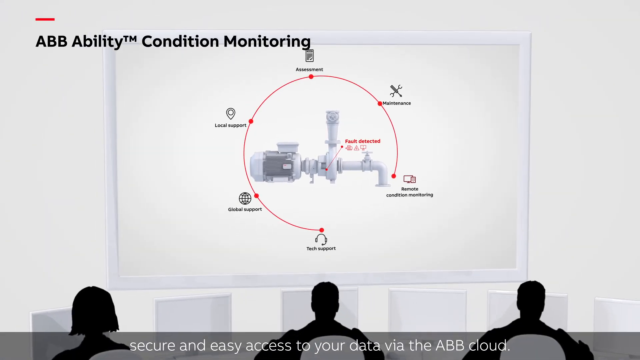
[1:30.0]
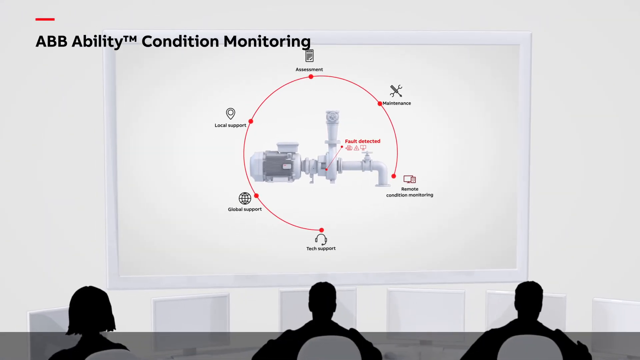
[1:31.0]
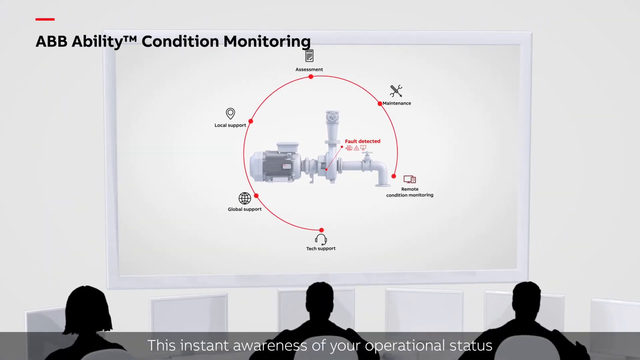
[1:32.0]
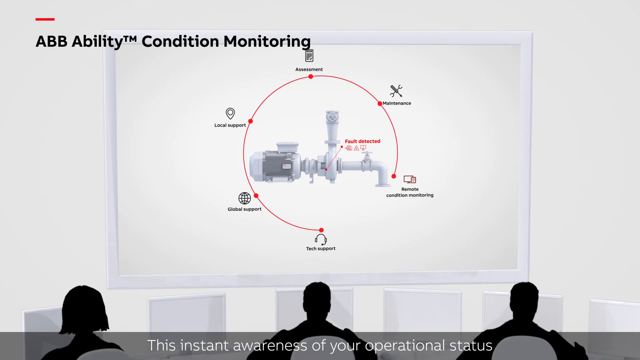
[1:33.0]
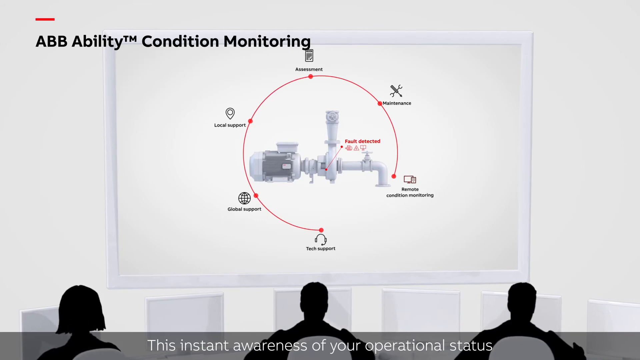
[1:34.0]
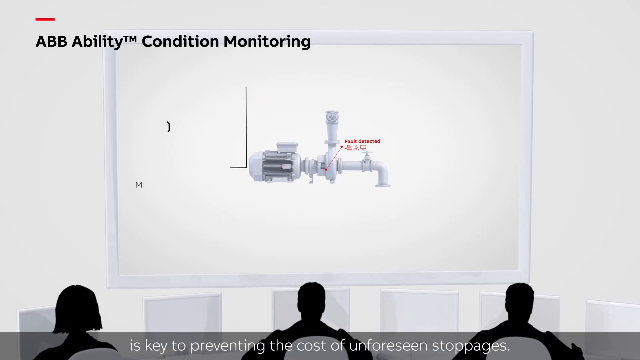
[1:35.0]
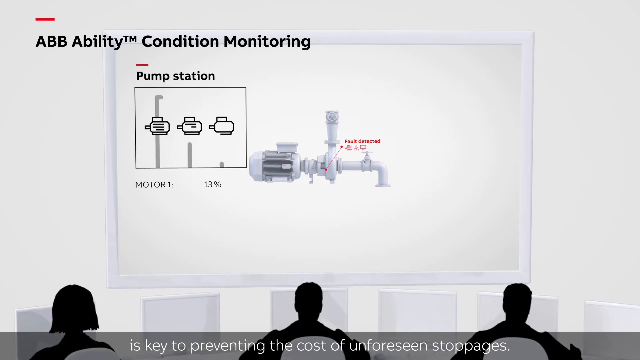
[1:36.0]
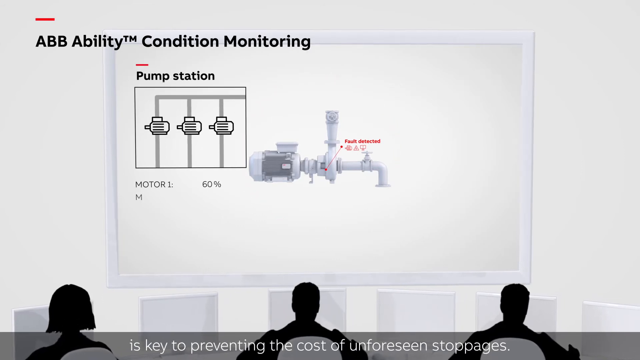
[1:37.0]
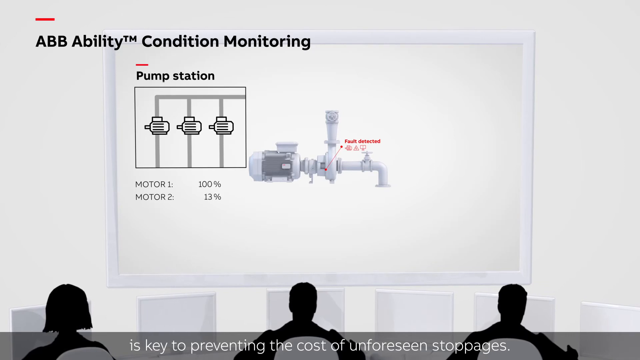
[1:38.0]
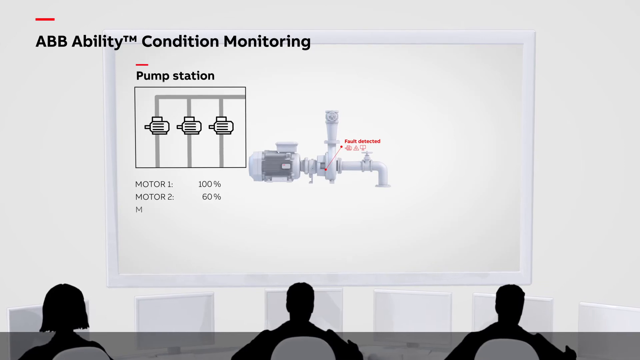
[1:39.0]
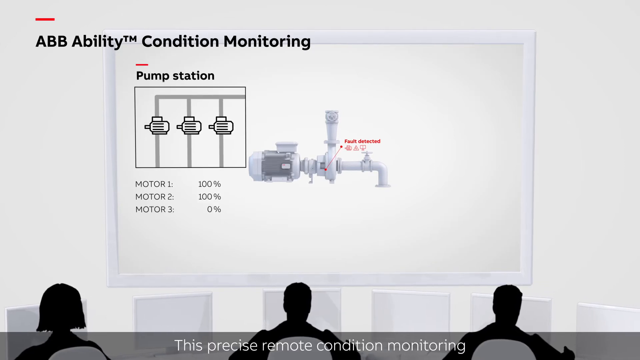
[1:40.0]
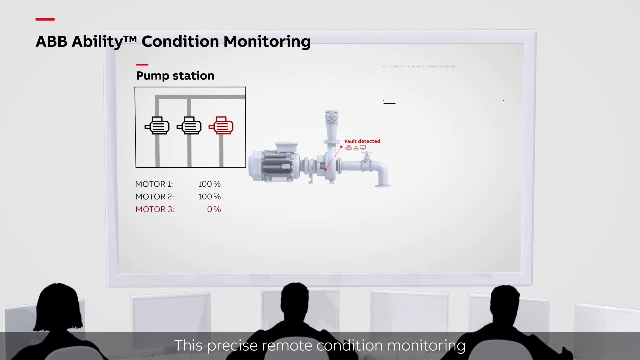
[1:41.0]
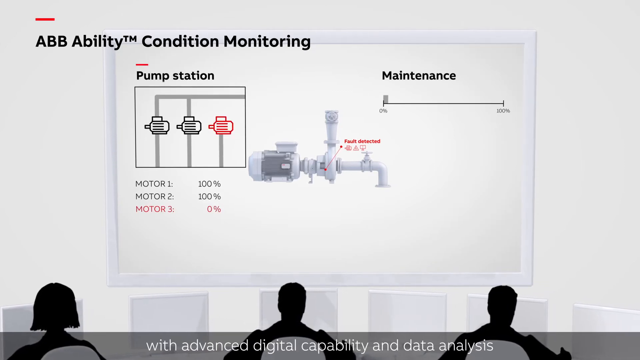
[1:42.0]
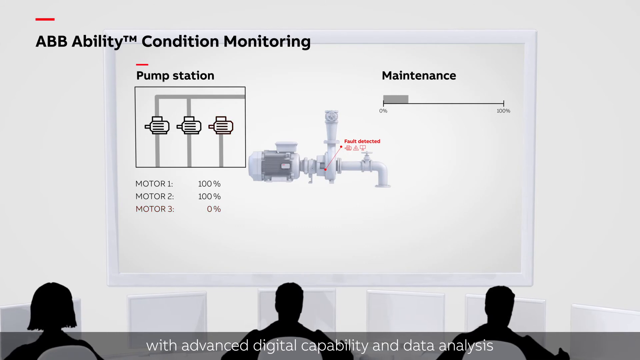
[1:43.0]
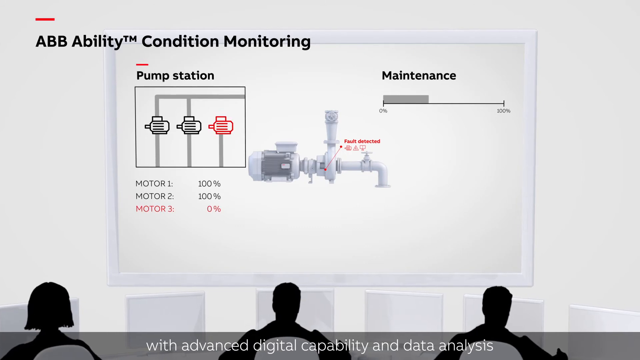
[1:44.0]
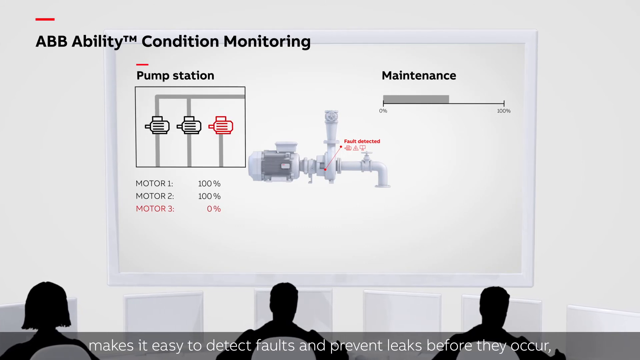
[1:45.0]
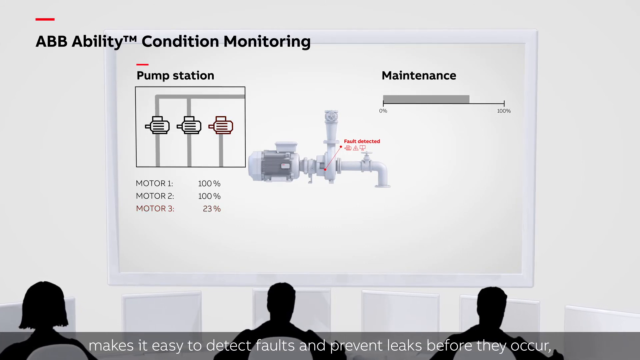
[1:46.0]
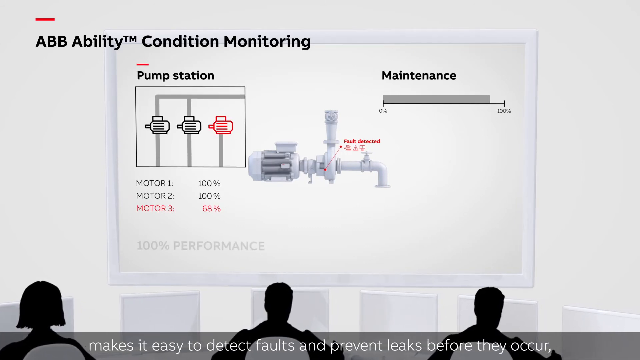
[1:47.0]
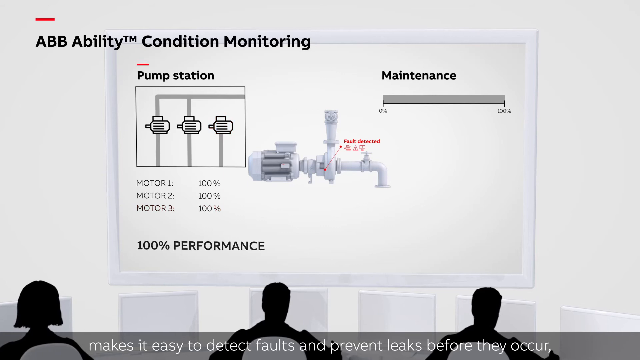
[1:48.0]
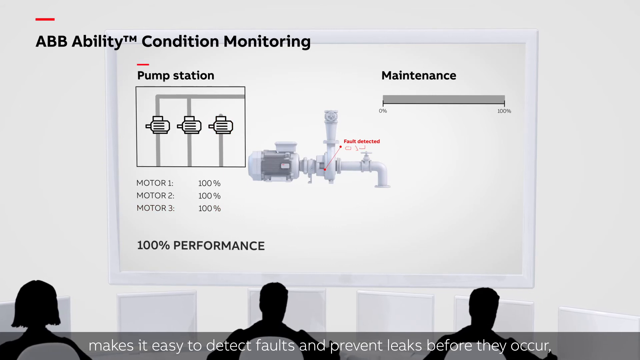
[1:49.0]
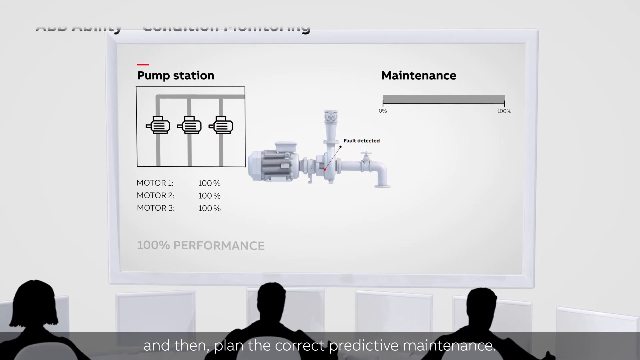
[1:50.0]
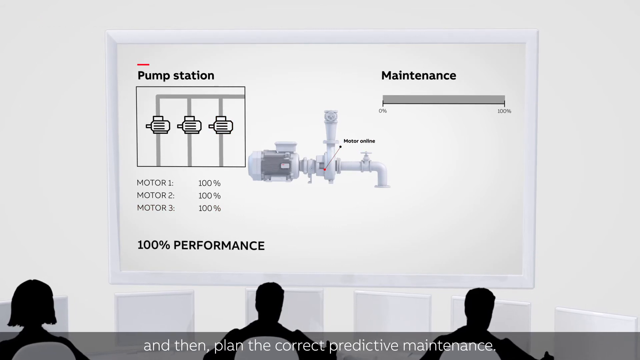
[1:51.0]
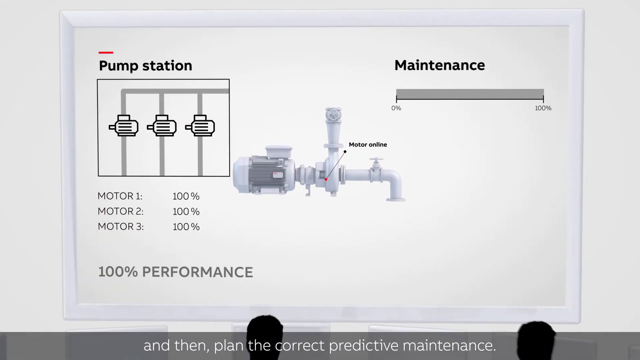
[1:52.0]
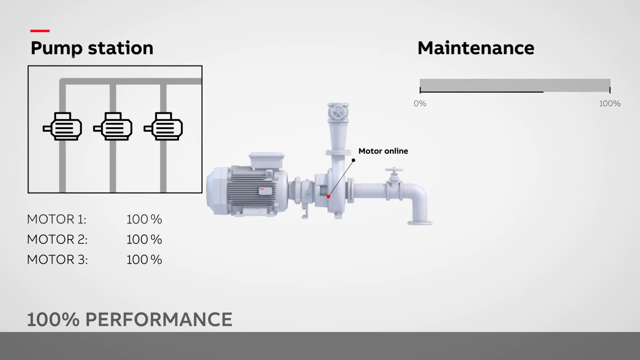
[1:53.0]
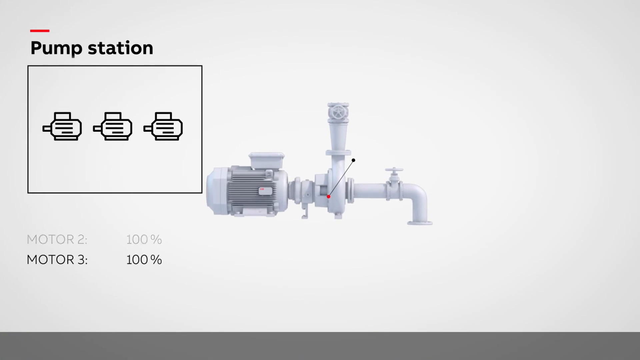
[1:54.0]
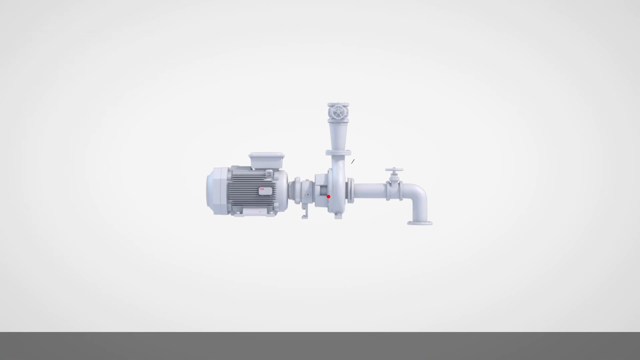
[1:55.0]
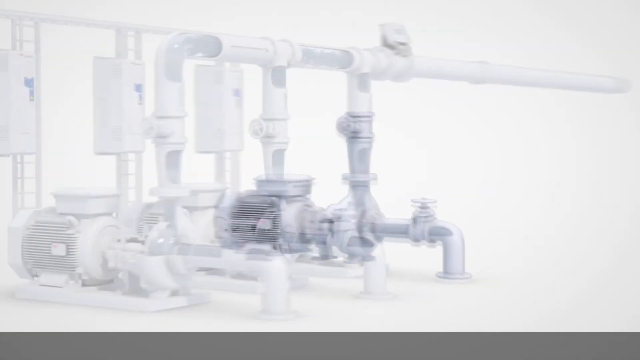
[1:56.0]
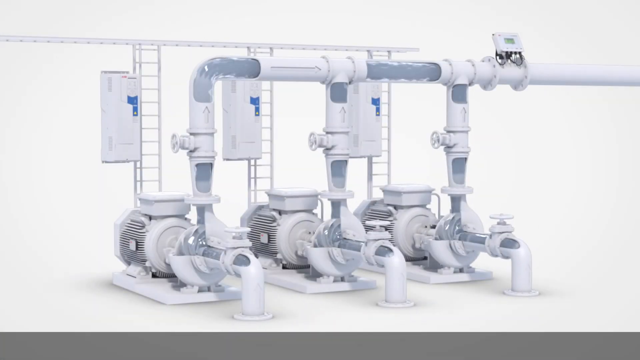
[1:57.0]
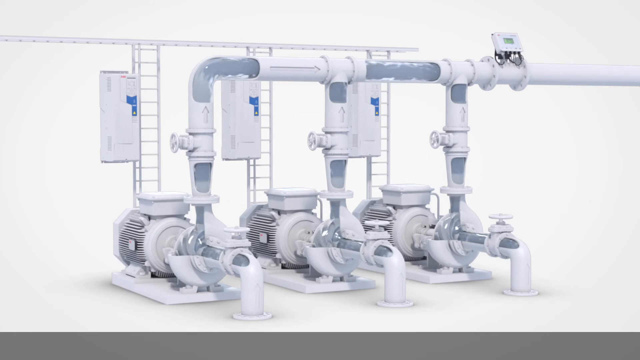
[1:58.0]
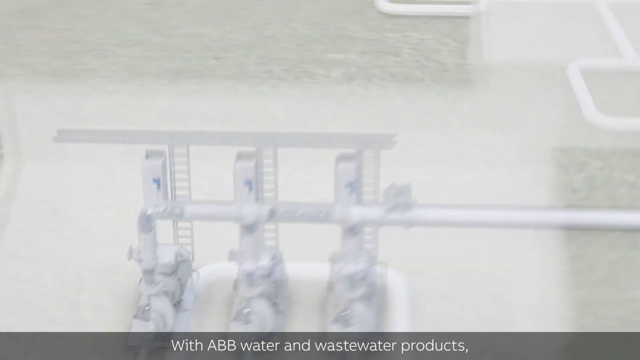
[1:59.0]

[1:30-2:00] The diagram shows an urban area, a town with long buildings, bathrooms and toilets, industrial water treatment, irrigation and desalination. Three big pumps are visible on the diagram. Then three people are seen sitting on chairs: one looks like a woman, and two are men, watching the diagram on the wall. They are operating and maintaining it, showing how it is maintained.